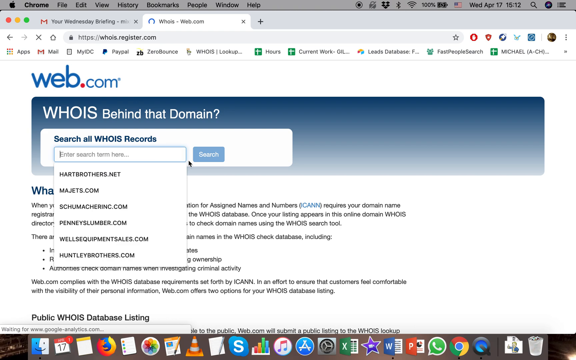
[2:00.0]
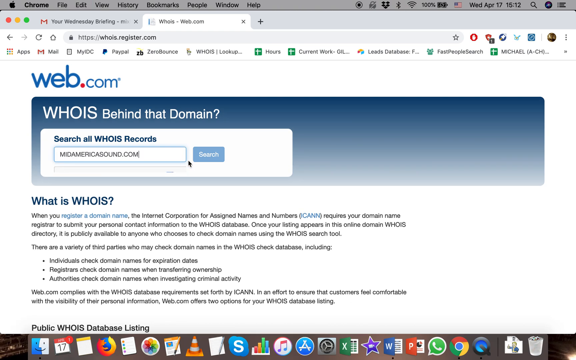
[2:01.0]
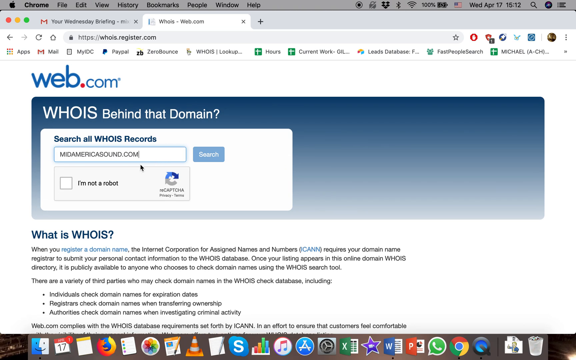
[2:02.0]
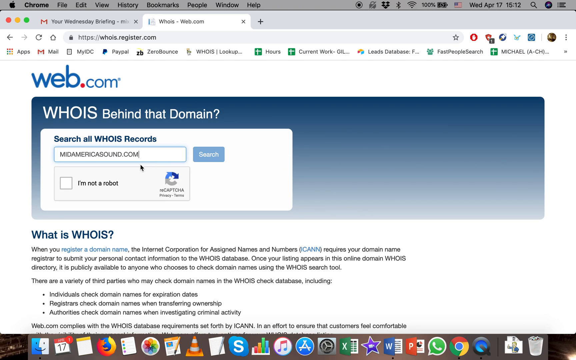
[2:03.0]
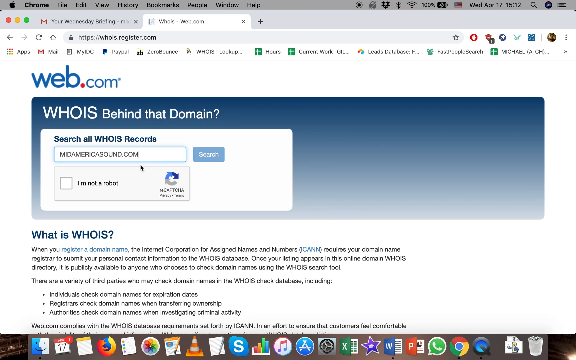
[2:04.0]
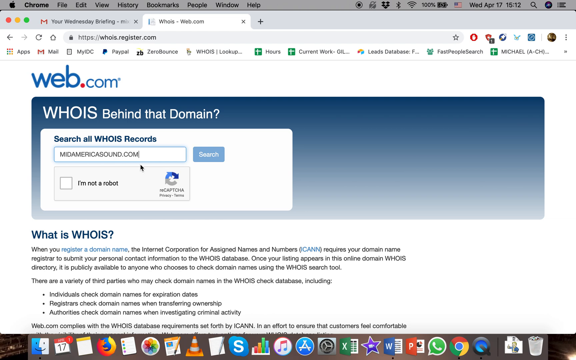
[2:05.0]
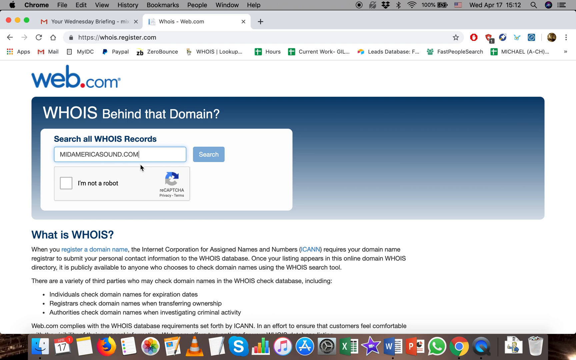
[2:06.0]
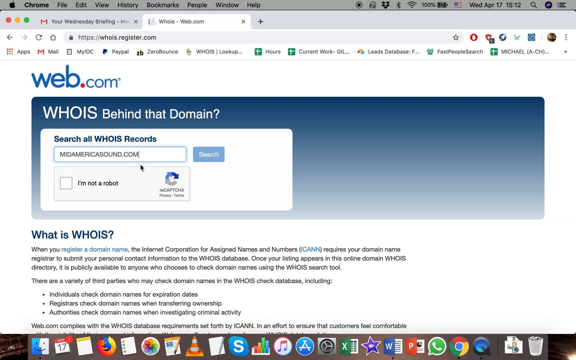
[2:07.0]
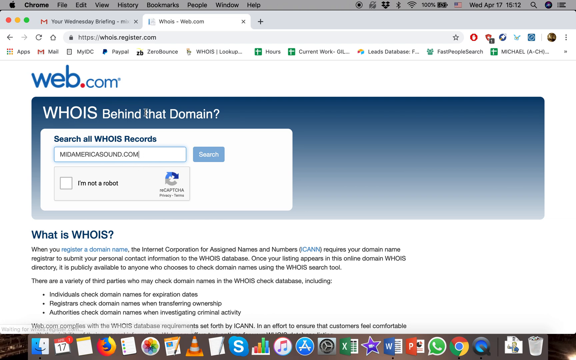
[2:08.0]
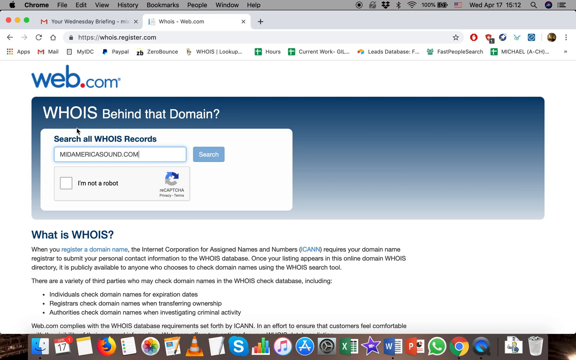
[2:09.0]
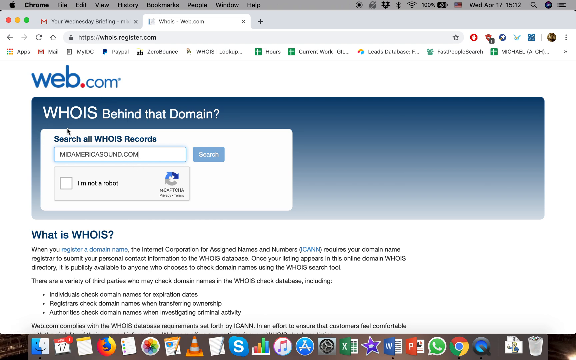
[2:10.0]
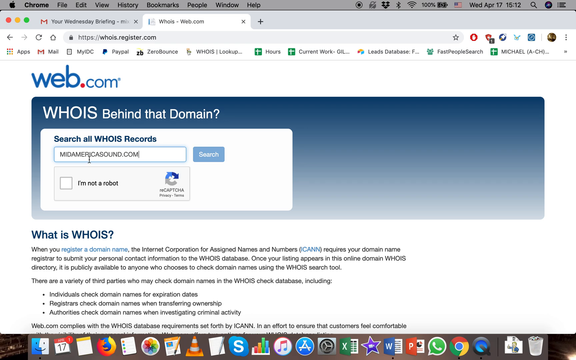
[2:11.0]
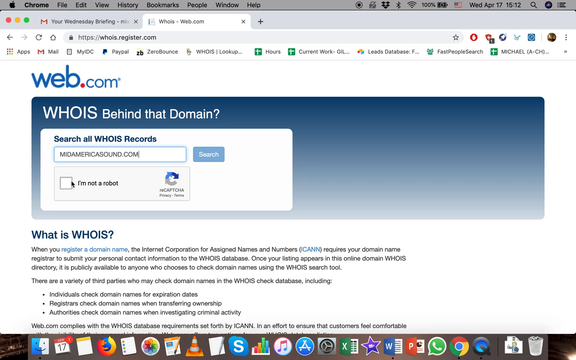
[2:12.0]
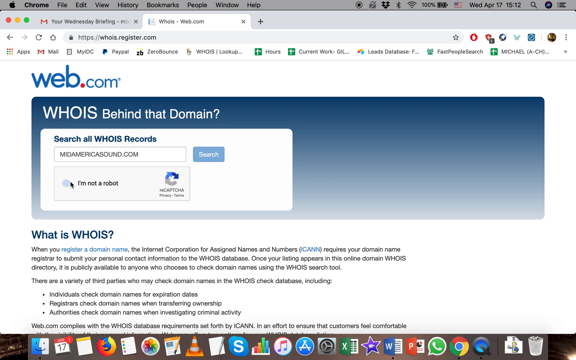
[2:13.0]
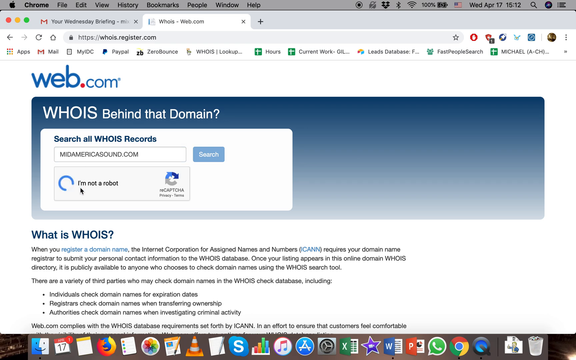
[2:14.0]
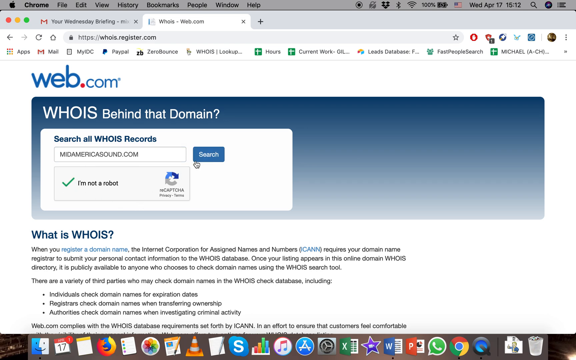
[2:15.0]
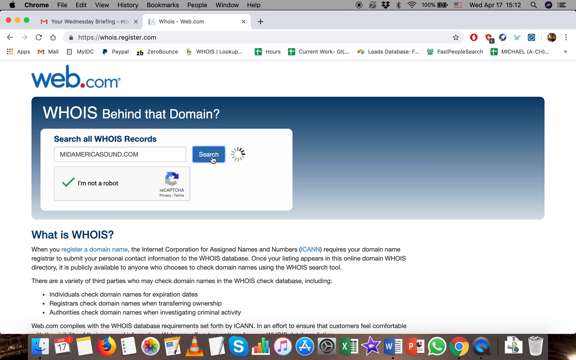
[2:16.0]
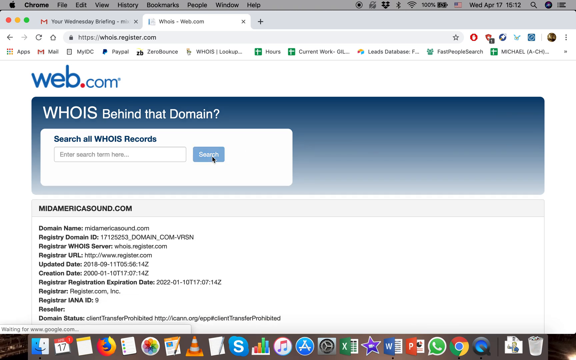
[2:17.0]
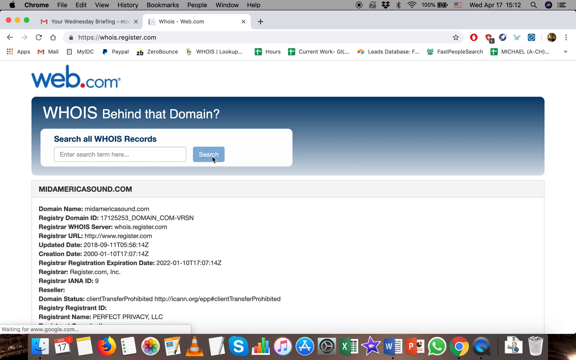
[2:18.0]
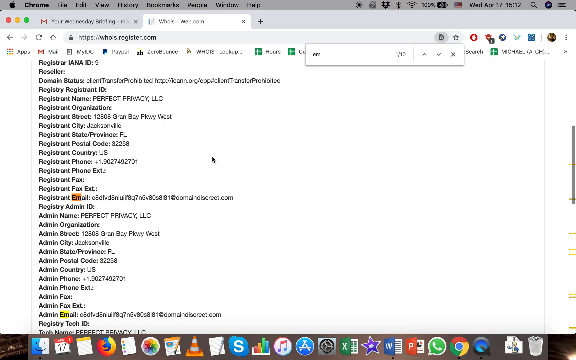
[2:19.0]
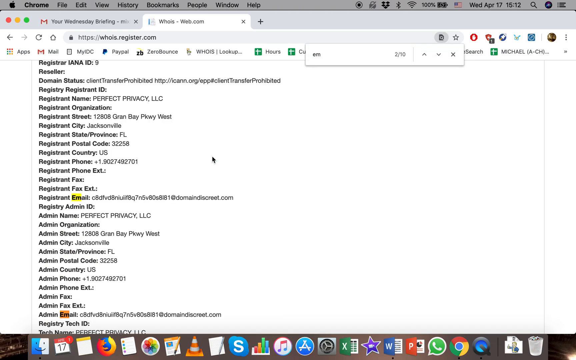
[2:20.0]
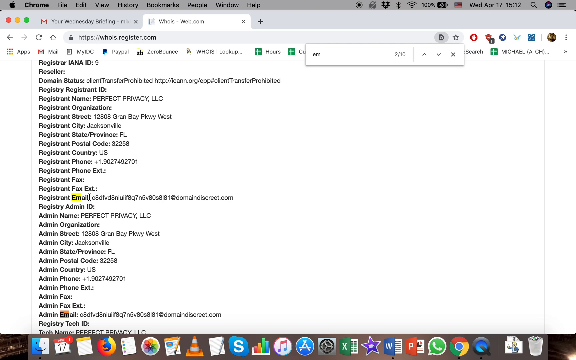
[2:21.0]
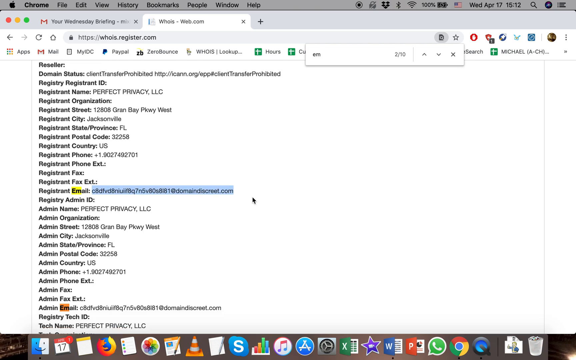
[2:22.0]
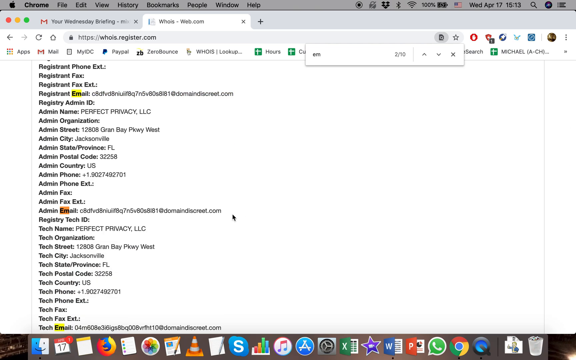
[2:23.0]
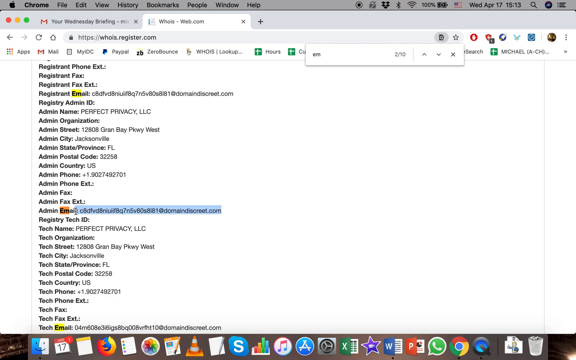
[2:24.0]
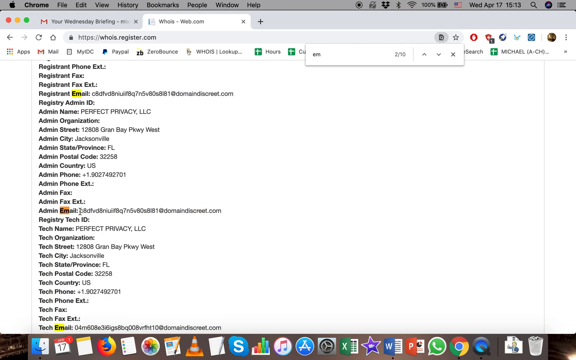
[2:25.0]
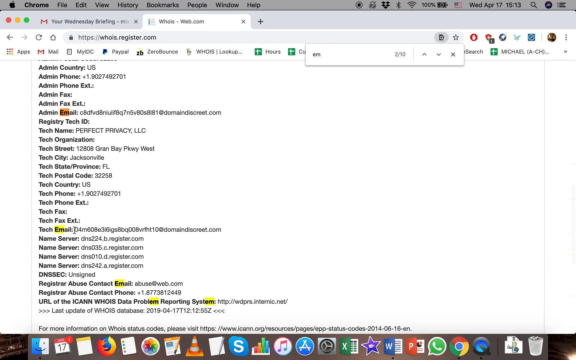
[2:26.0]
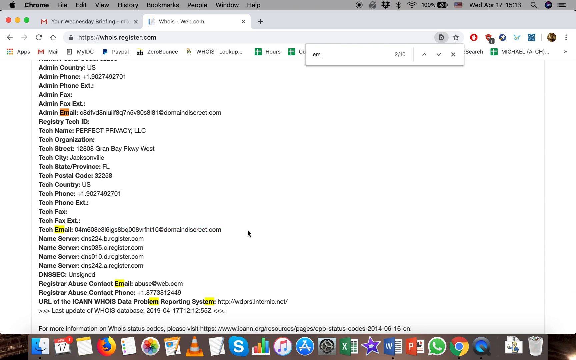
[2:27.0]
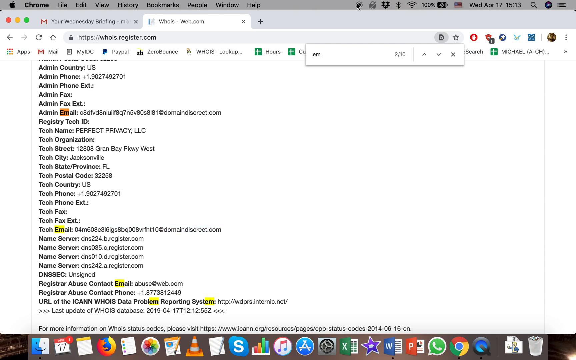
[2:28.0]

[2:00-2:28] The midamericasound.com domain is pasted into the Whois search on whois.register.com, with a robot check below. The user circles the cursor clockwise around "whois," then goes down and clicks the checkbox to confirm they are not a robot. They search and then use Ctrl-F to look for email. The registrant email looks like a spam email made of random letters and numbers, such as "C8D1FVD" and more, along with discrete.com. Further down is an admin email that looks the same, random bits of email, and a tech email that also looks randomly generated. The user highlights all three, going through them one by one. Below the search there is also a section called "what is who is" that explains what they do.